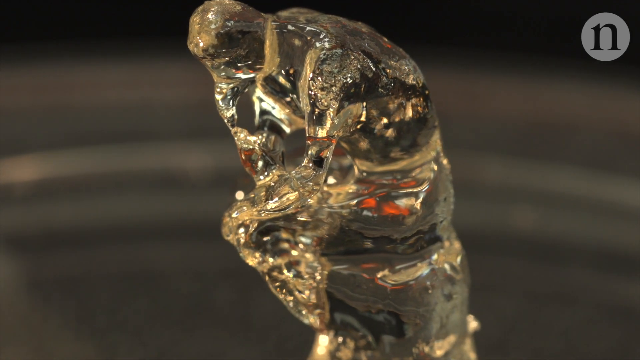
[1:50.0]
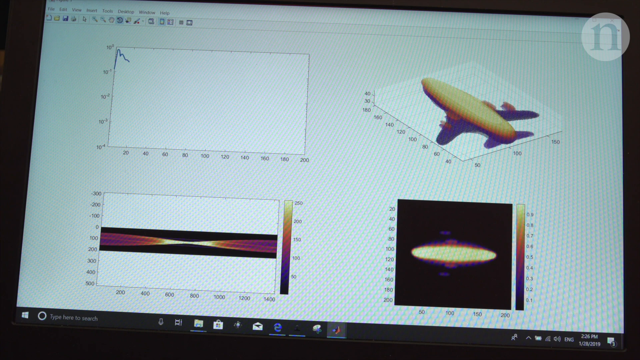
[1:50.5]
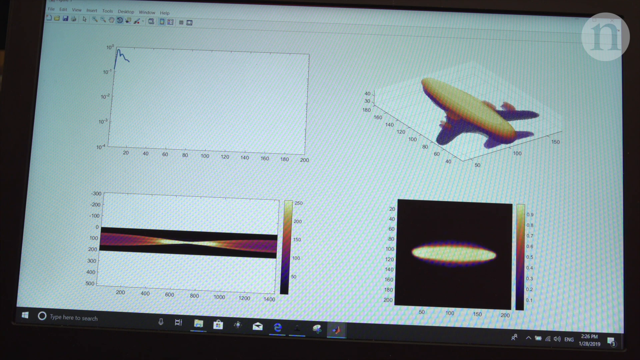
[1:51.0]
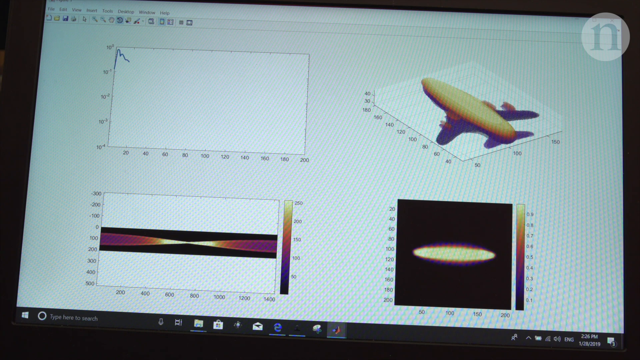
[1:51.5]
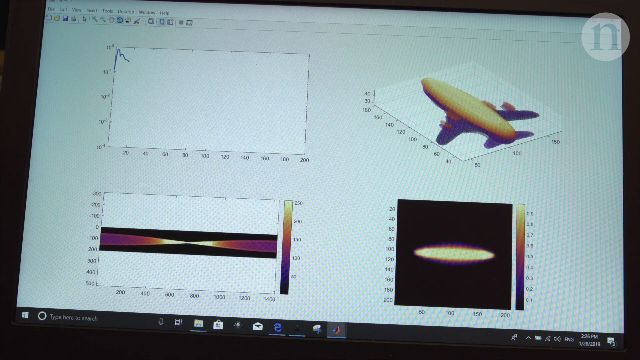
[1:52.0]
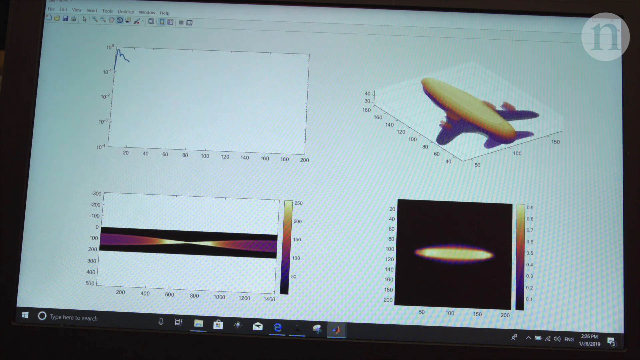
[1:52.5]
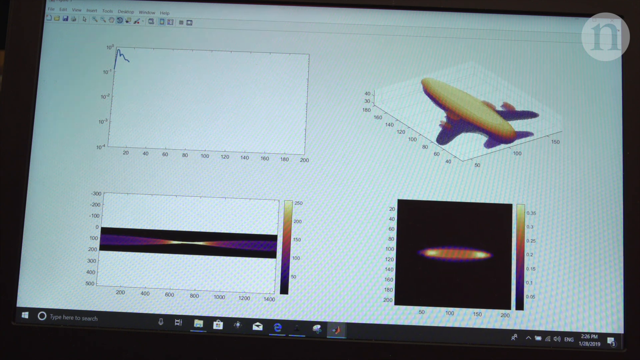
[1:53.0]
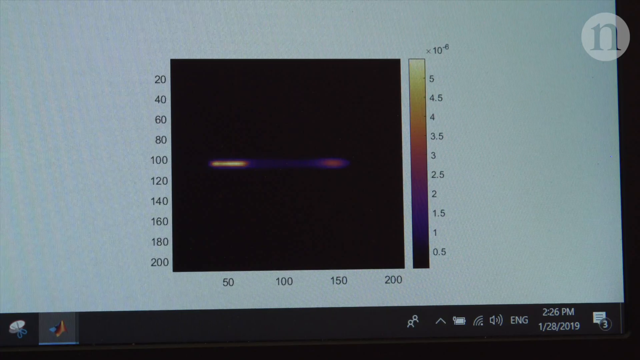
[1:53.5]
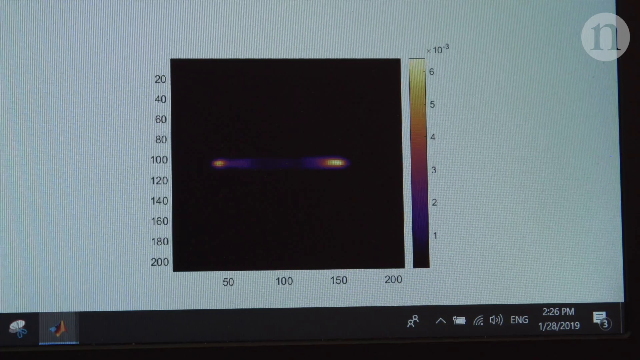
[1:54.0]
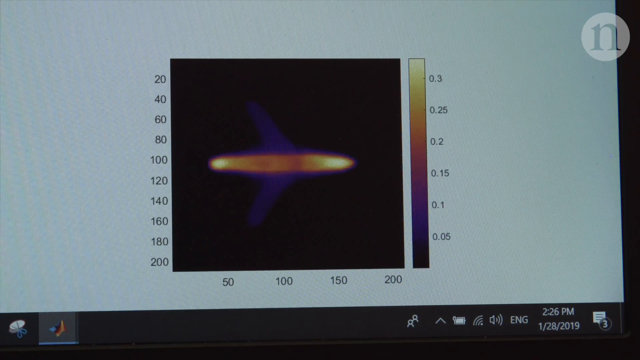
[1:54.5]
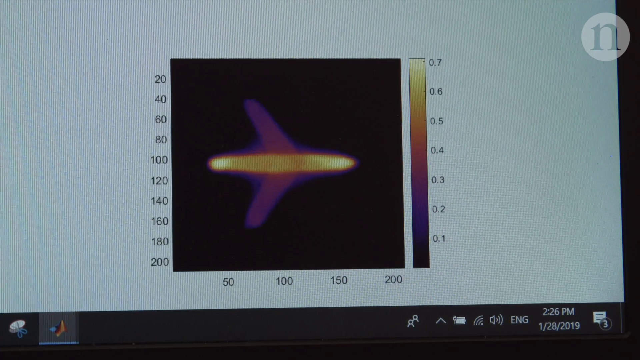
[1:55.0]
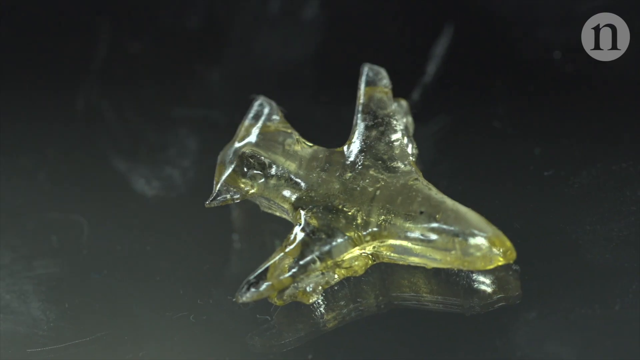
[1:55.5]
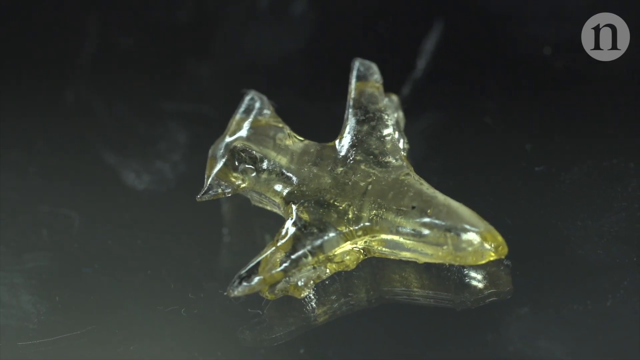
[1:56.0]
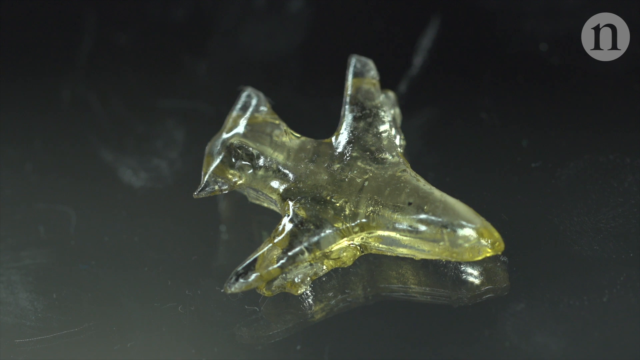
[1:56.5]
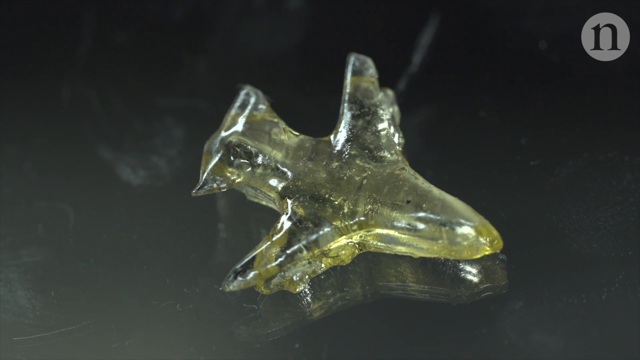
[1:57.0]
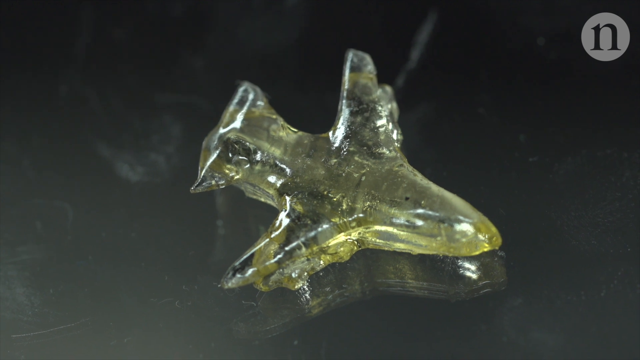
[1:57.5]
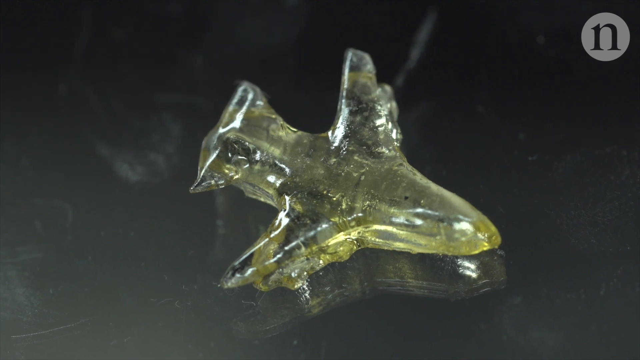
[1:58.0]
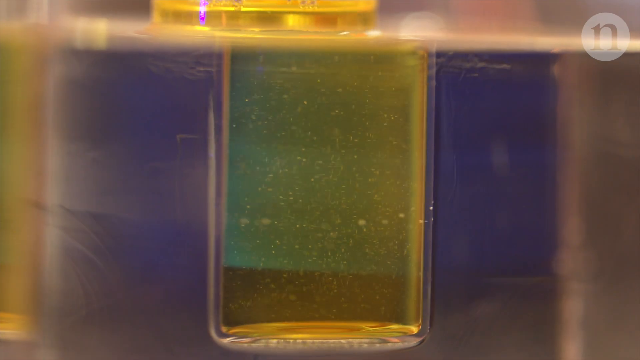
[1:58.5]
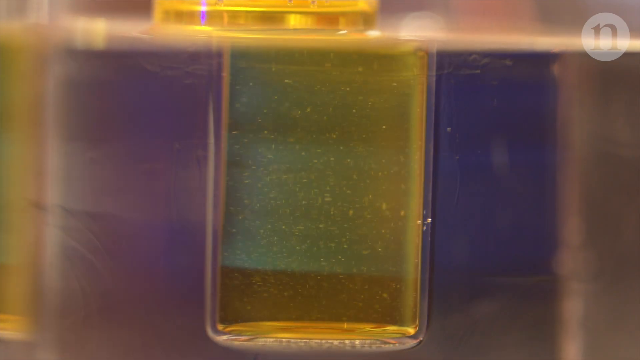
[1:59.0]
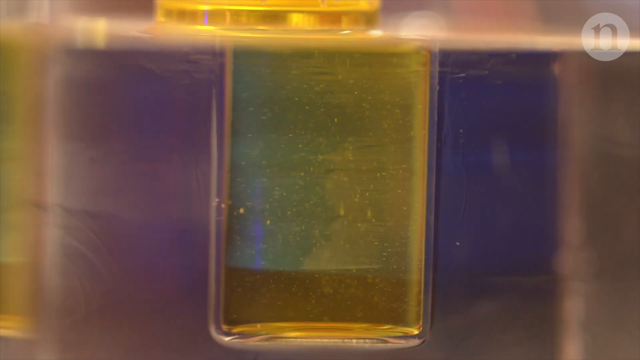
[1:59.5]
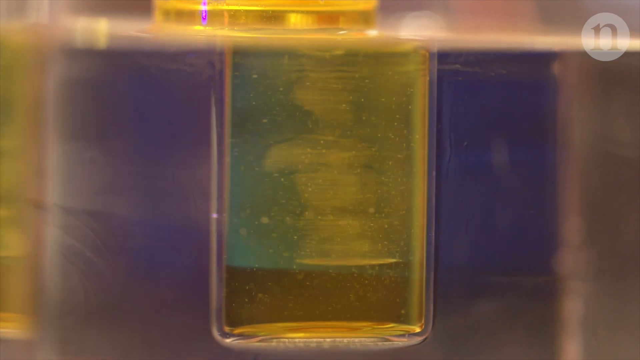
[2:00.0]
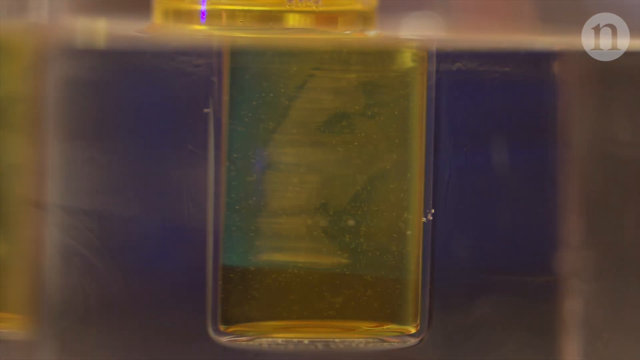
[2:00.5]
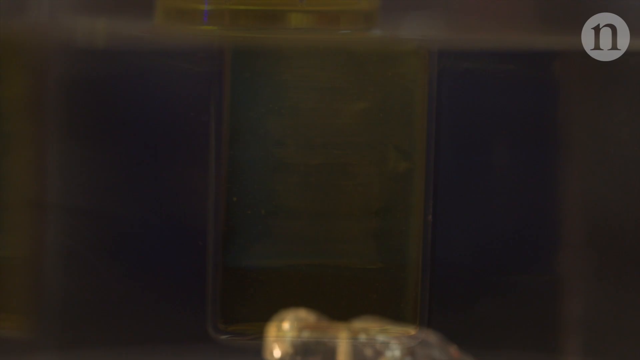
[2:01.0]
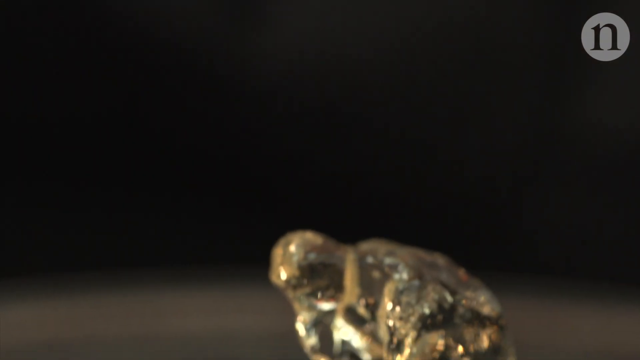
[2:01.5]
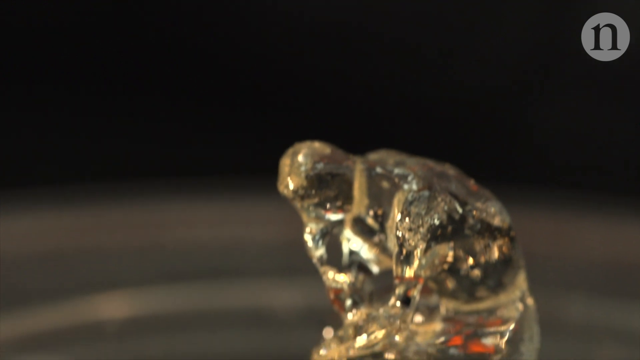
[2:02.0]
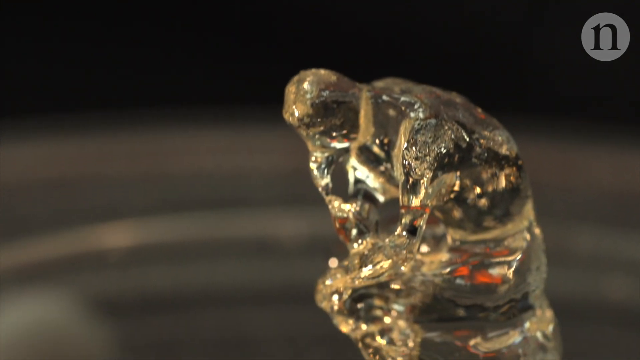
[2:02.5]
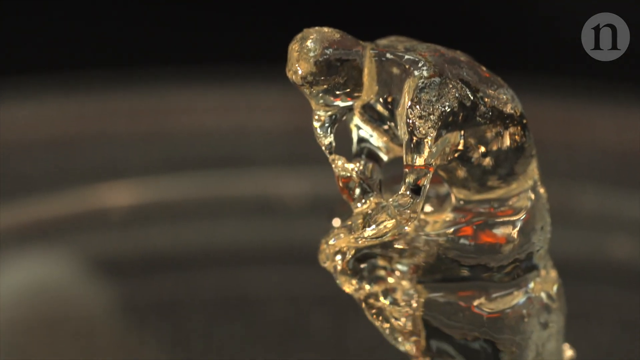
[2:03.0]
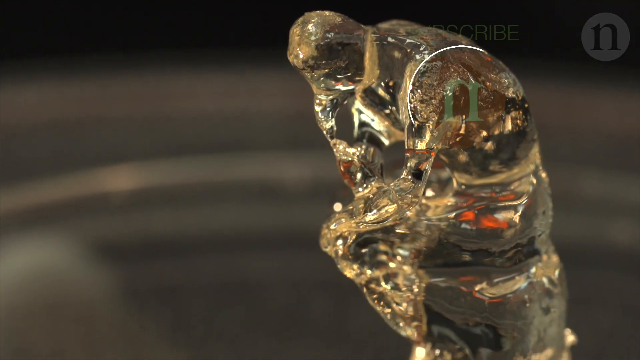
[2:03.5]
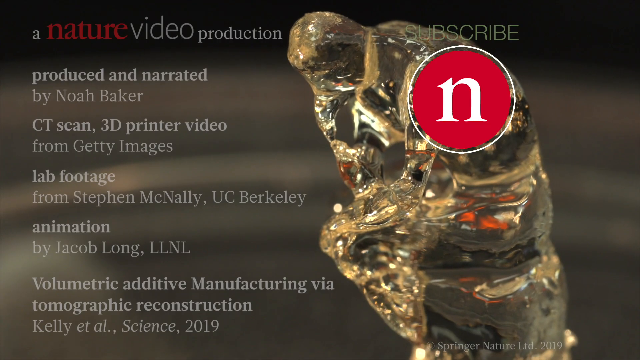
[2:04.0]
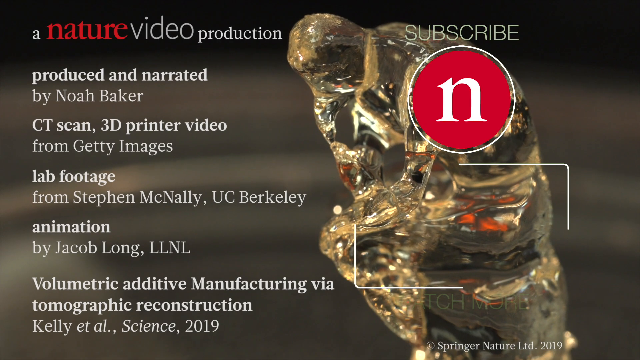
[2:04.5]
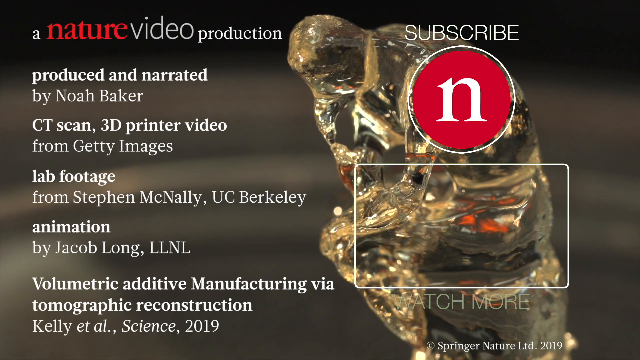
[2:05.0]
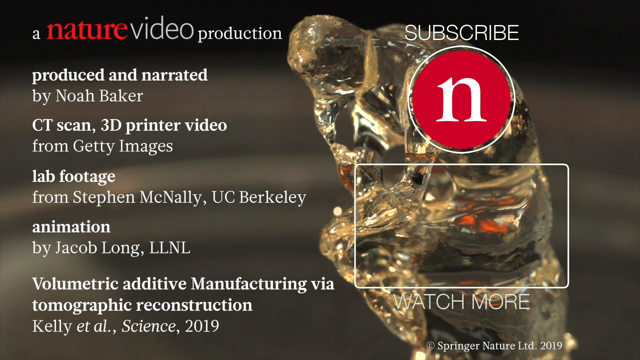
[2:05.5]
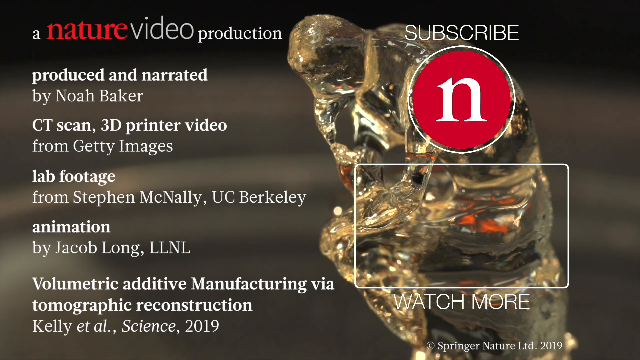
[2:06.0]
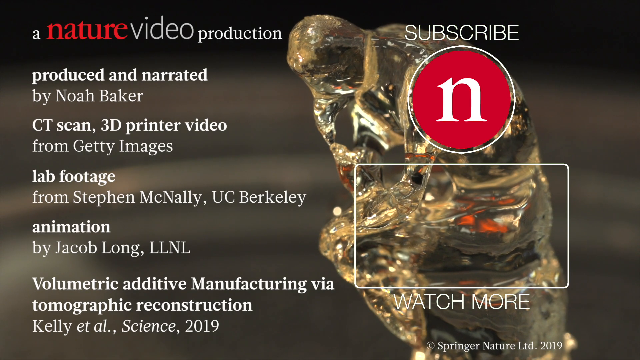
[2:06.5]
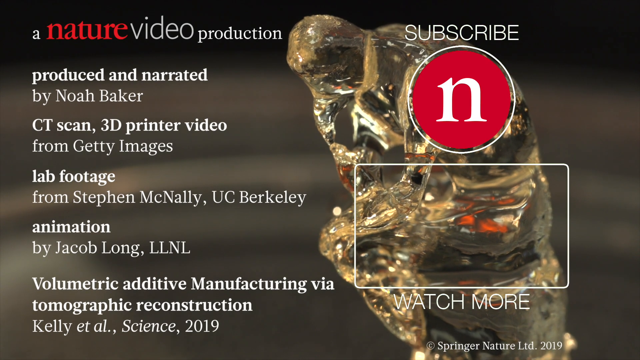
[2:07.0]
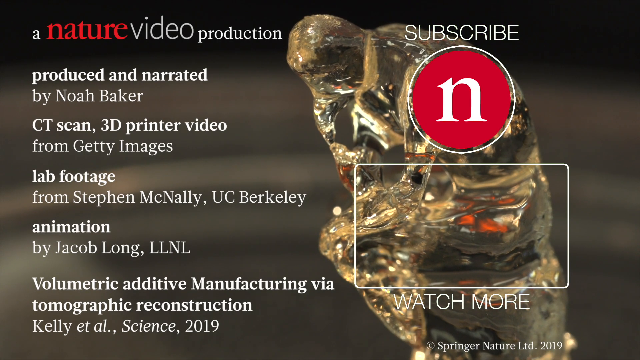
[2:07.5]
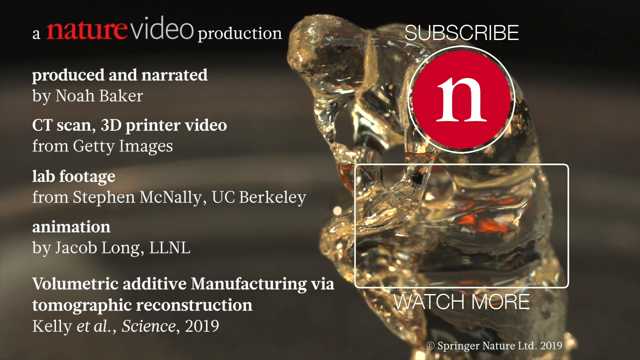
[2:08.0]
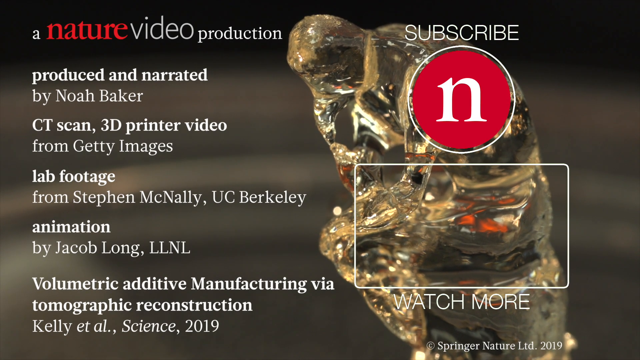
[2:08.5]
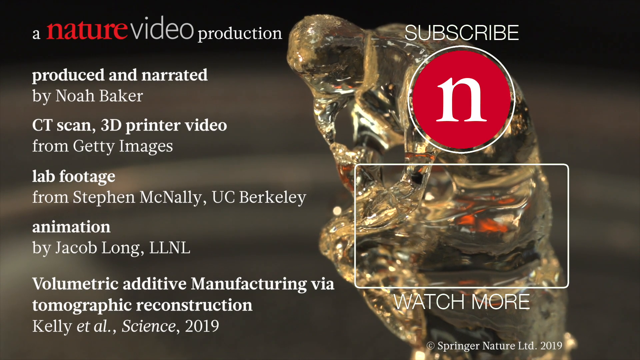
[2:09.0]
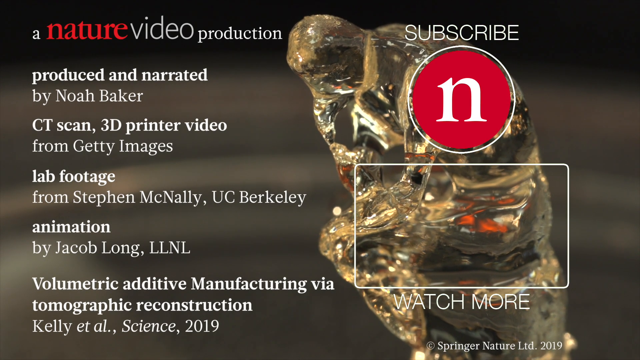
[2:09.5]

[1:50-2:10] Information appears on the page along with what seems to be a plane and the structure of a plane, and then a plane is made through this process. Credits appear, including "produced and narrated by Noah Baker", "CT scan, 3D printer video from Getty Images", "lab footage from Stephen McNally, UC Berkeley", "animations by Jacob Long, LLNL" and "volumetric additive manufacturing".